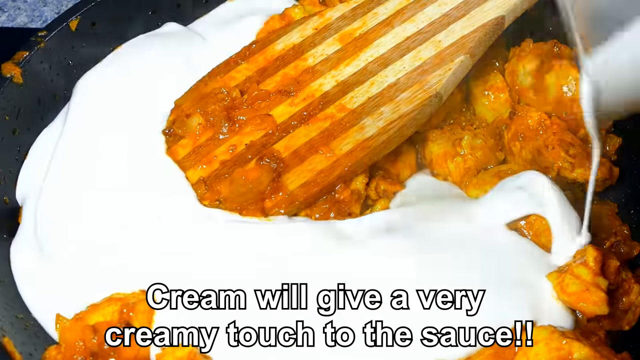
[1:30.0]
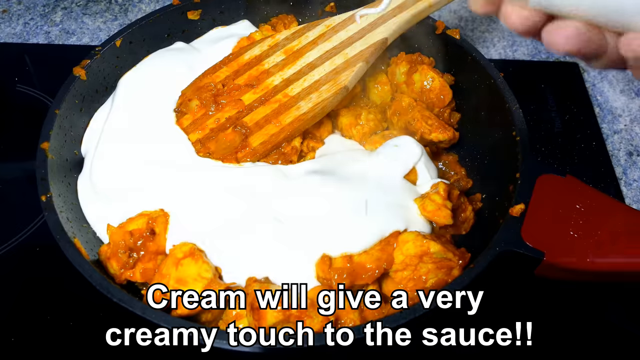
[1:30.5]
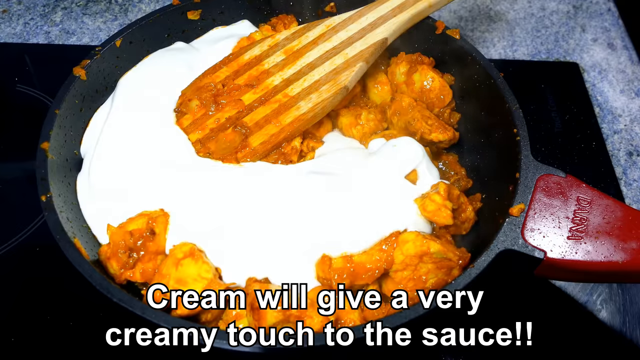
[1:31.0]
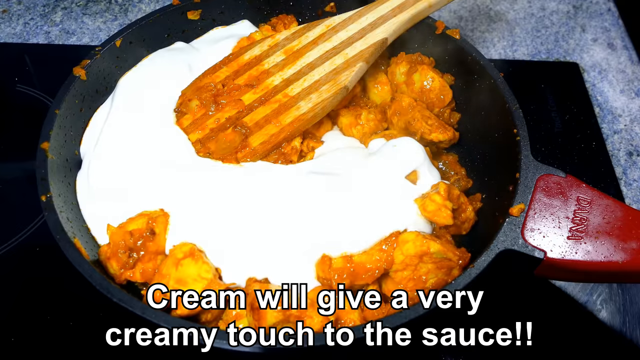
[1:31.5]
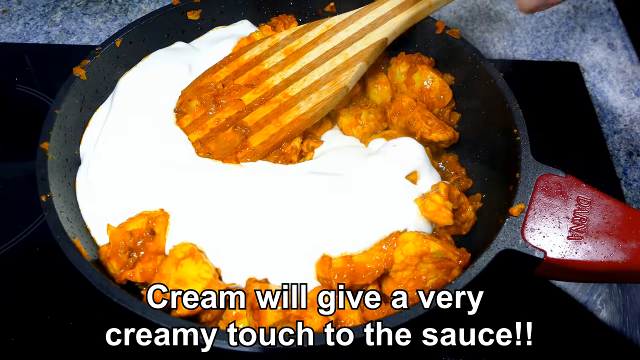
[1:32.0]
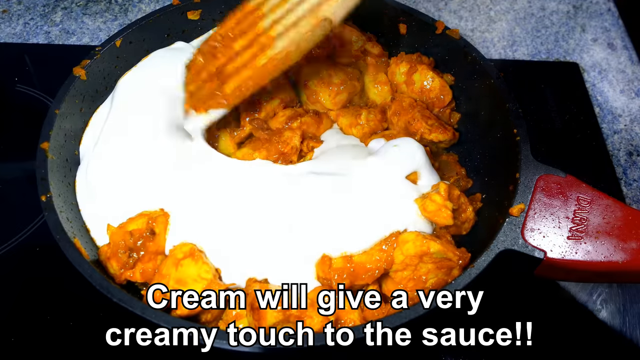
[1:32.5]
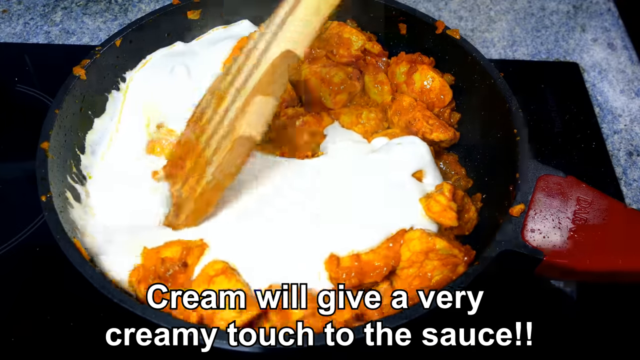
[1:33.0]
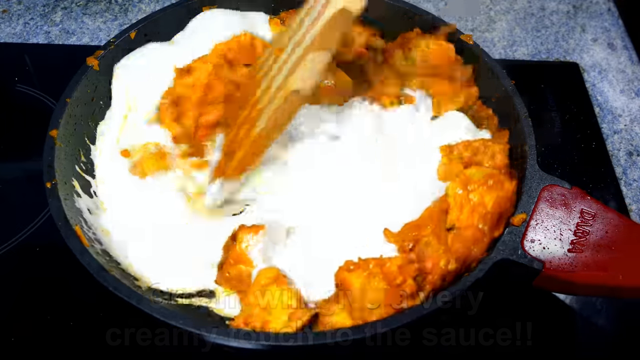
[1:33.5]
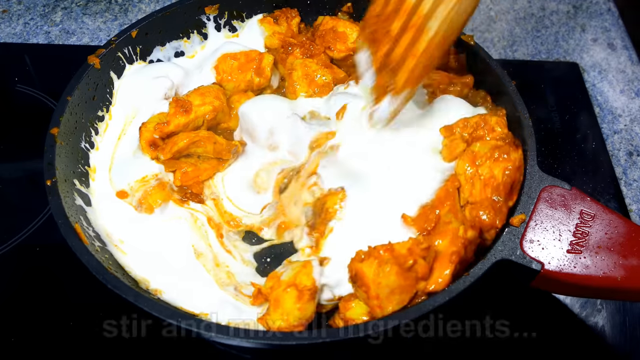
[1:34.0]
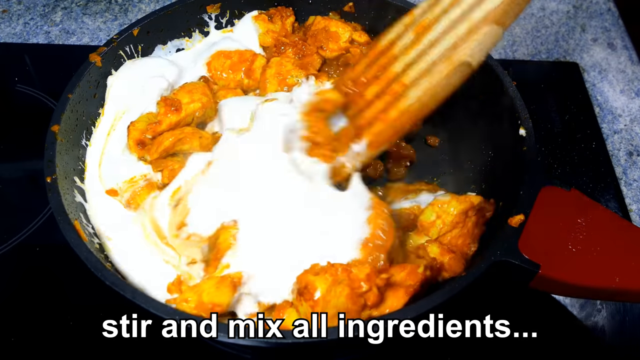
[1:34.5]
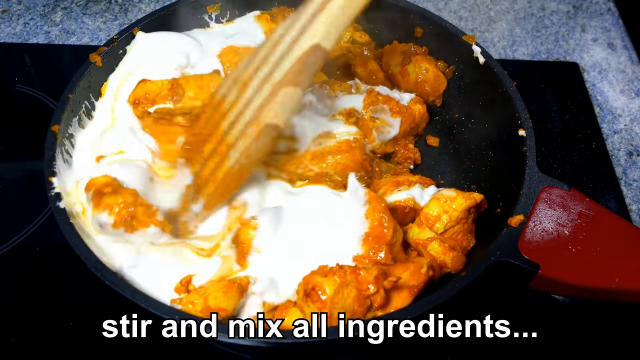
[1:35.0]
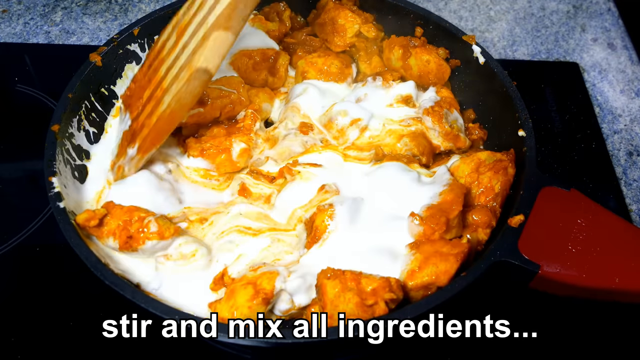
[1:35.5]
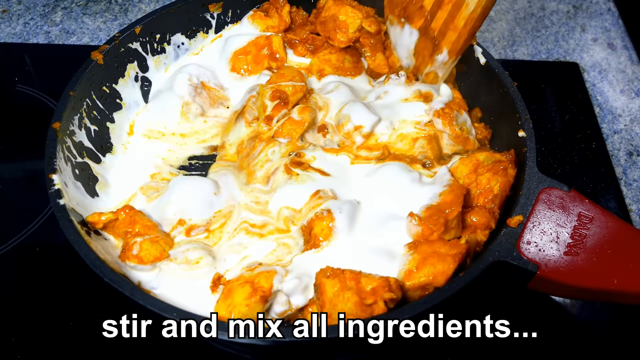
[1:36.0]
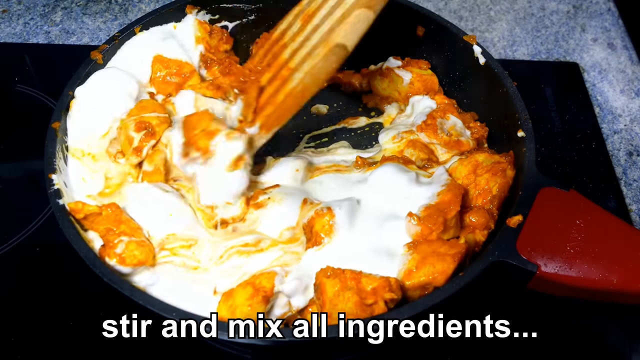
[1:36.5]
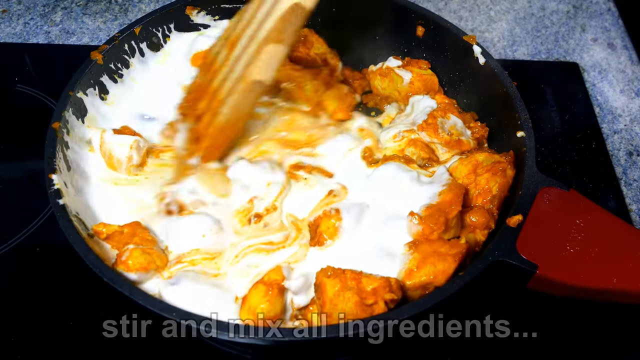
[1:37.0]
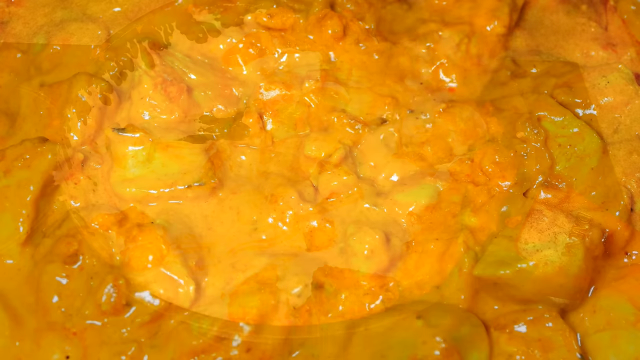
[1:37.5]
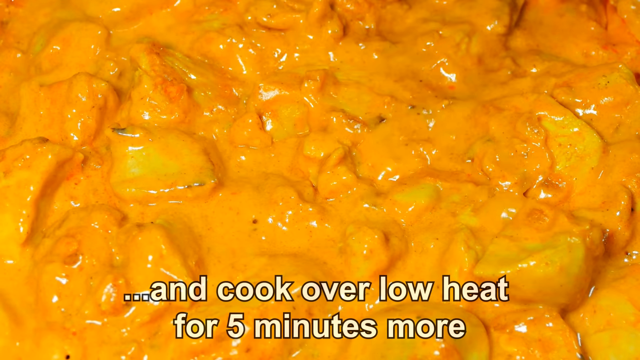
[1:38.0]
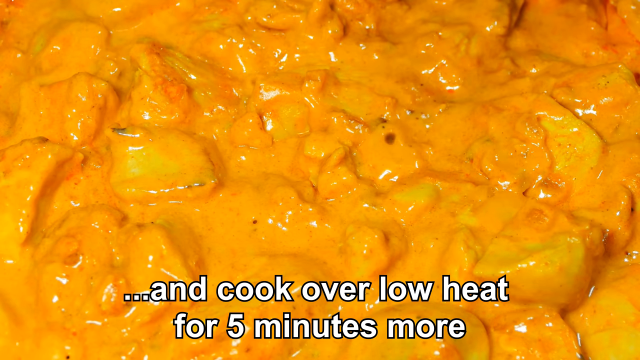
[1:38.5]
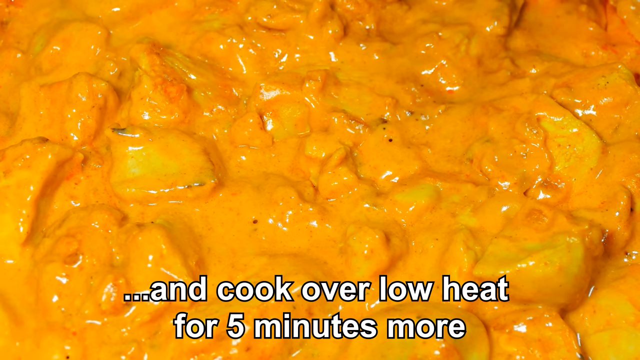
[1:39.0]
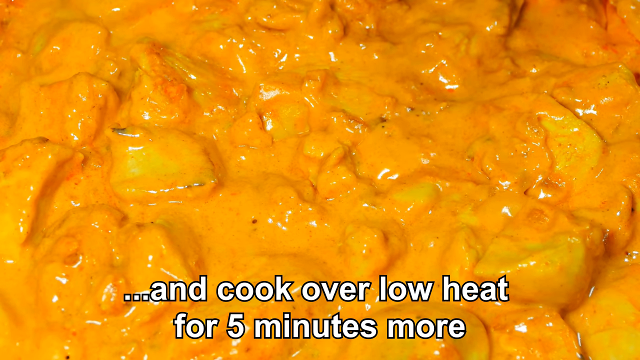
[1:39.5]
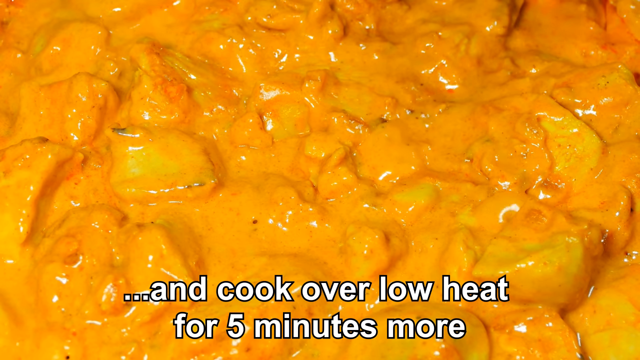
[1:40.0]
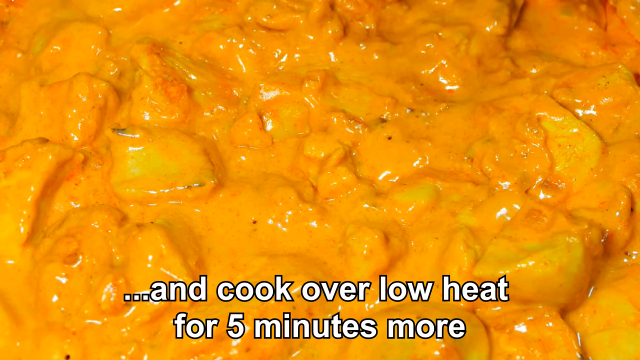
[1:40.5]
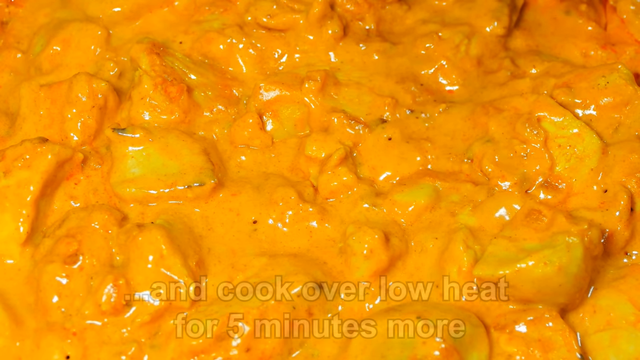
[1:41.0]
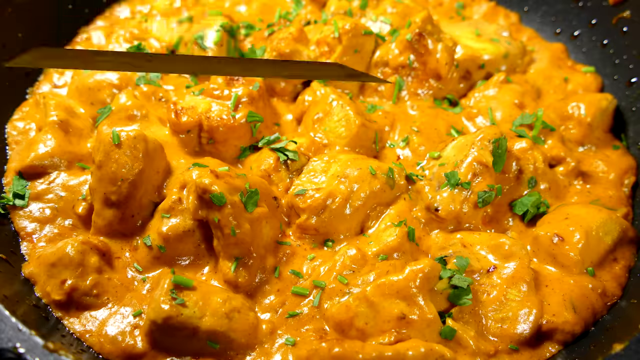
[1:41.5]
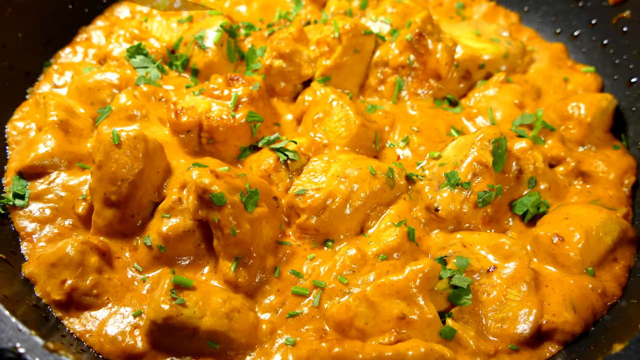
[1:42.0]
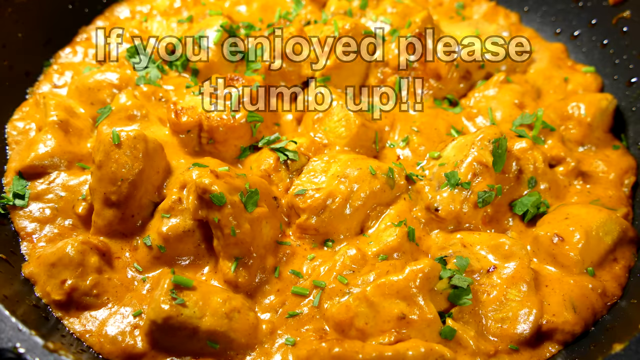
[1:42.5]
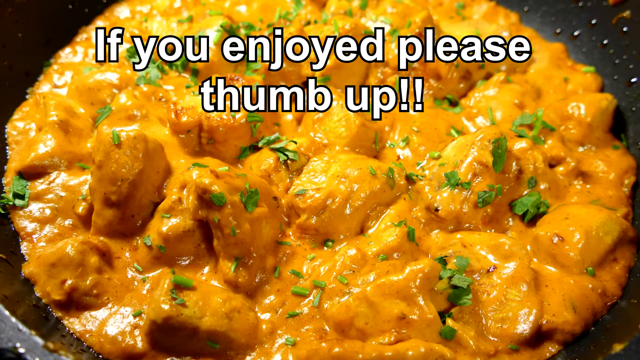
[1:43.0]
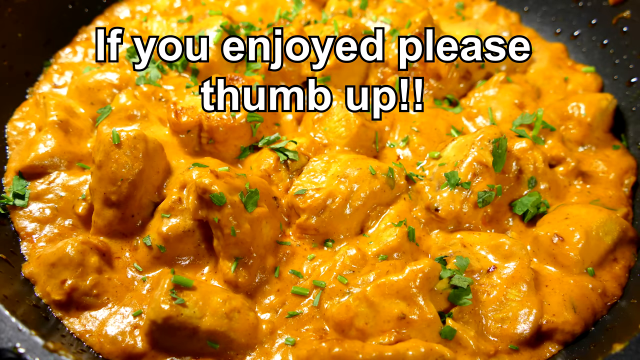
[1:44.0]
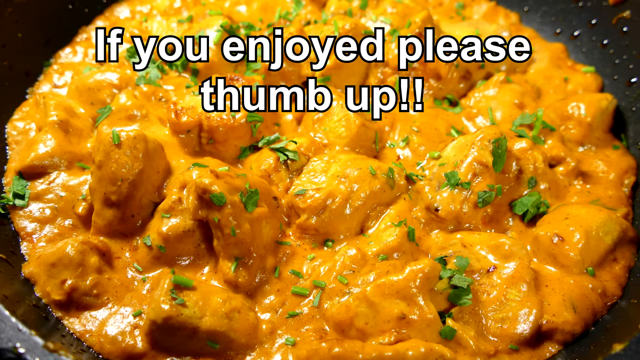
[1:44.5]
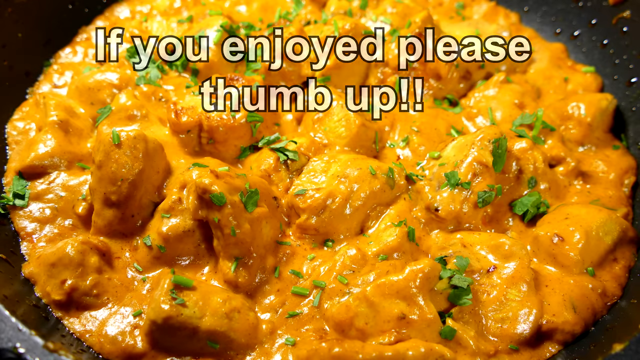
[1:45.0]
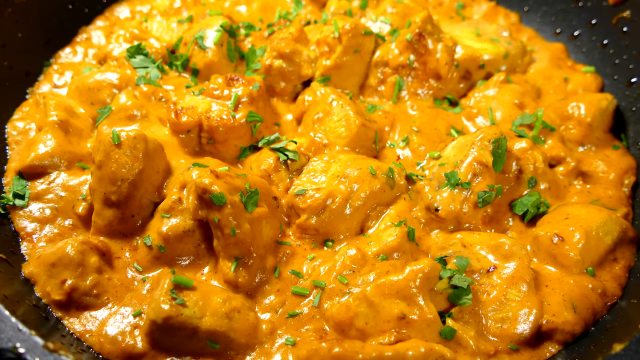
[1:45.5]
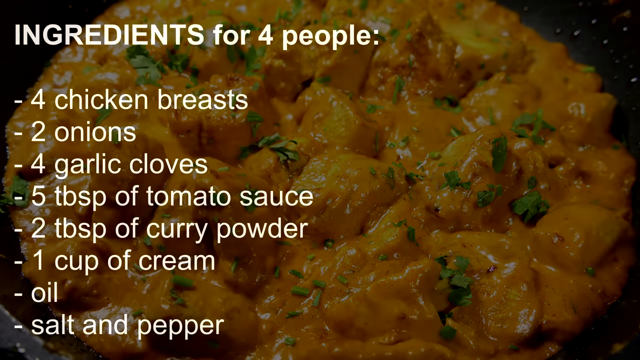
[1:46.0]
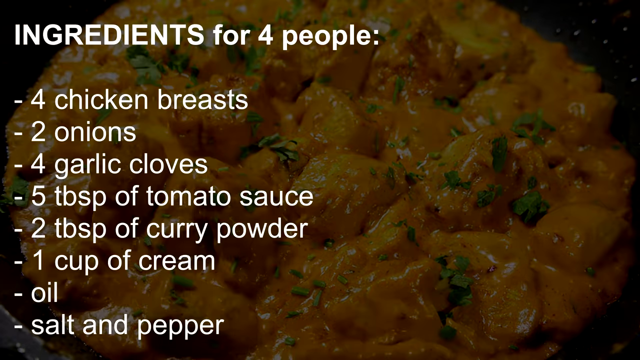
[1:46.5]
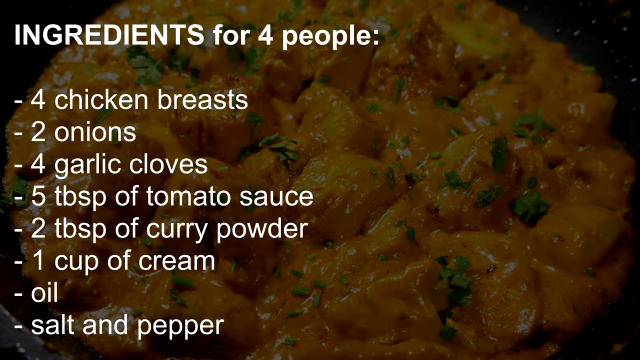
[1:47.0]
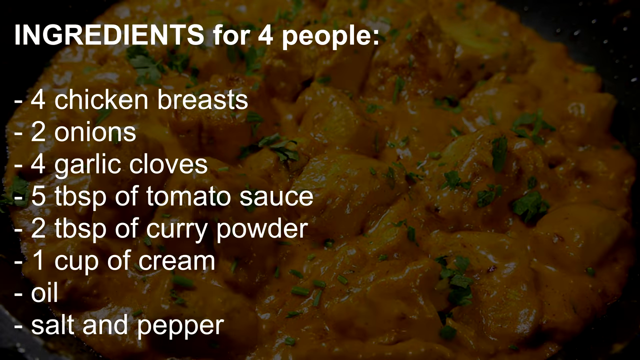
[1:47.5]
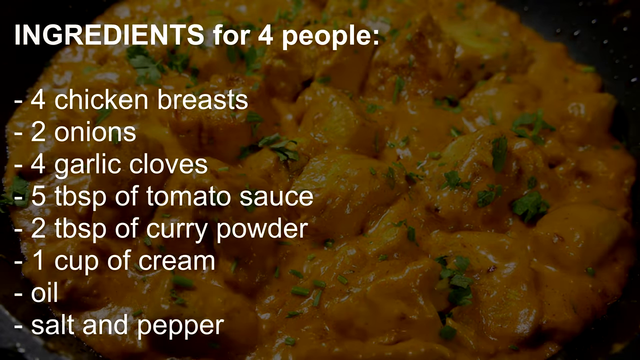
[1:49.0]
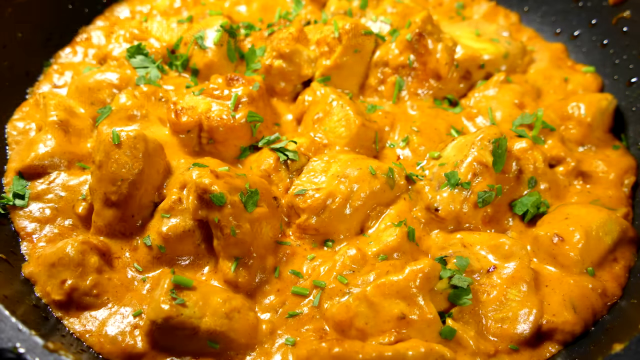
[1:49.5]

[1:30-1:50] Text says "the cream will give a very creamy sauce to the stir," and the ingredients are stirred, mixed, and cooked over low heat for five minutes more. Text then says "if you enjoyed, please thumbs up the video." The complete ingredient list follows, with ingredients for four people: four chicken breasts, two onions, four garlic cloves, five tablespoons of tomato sauce, two tablespoons of curry powder, one cup of cream, oil, salt, and pepper.